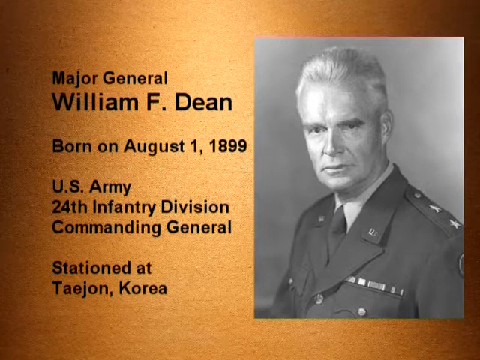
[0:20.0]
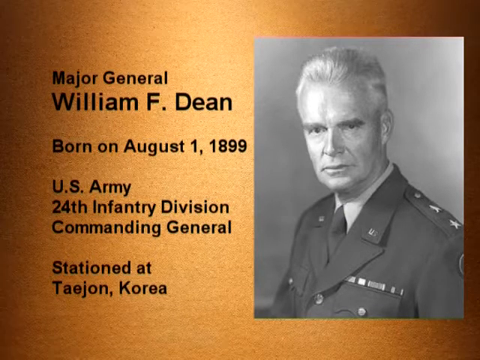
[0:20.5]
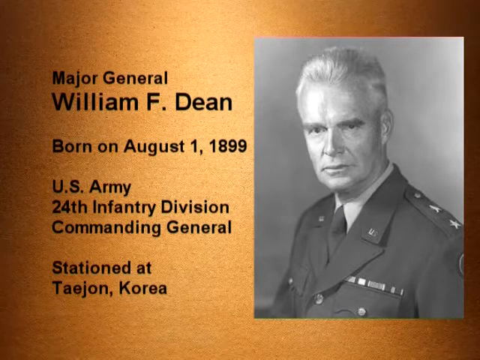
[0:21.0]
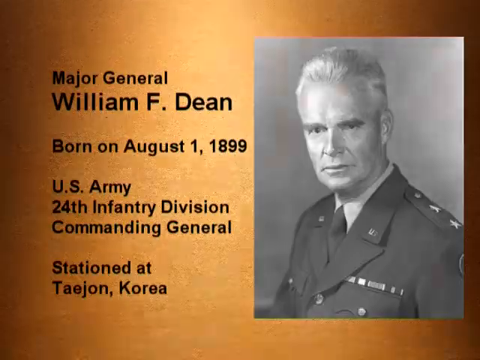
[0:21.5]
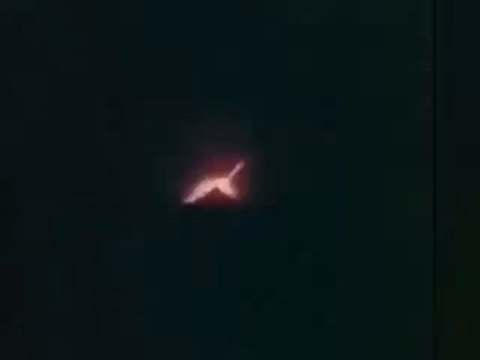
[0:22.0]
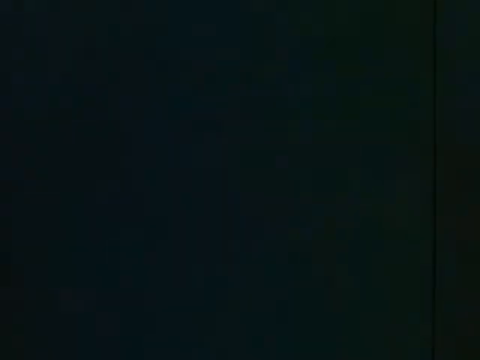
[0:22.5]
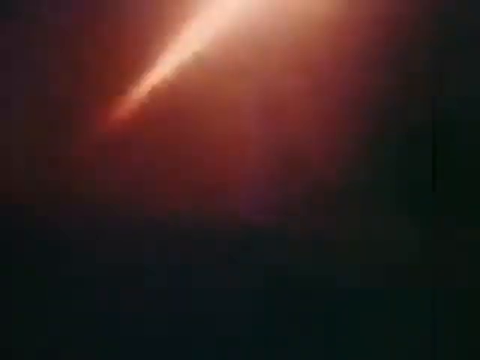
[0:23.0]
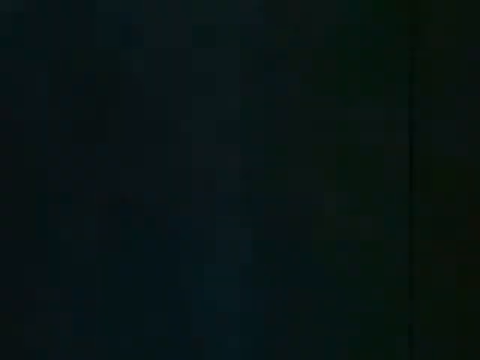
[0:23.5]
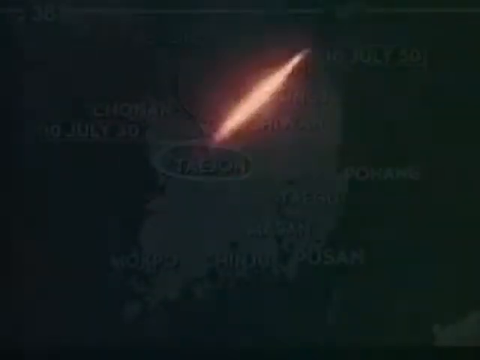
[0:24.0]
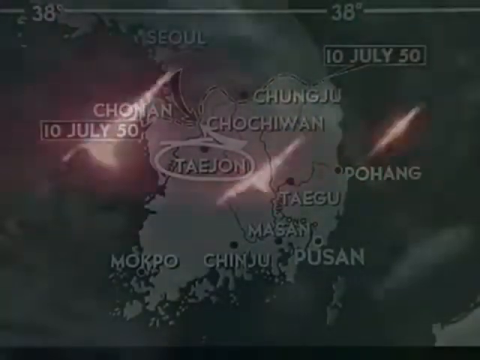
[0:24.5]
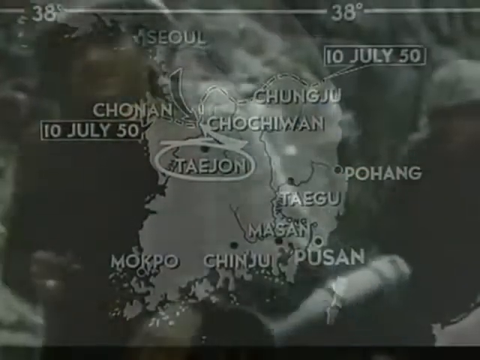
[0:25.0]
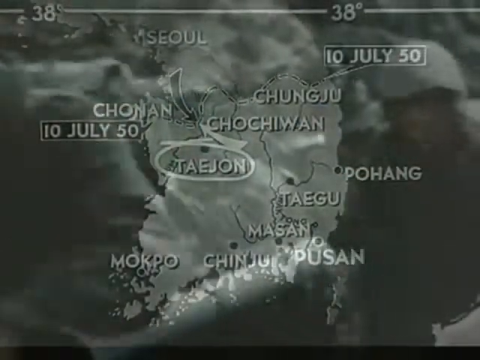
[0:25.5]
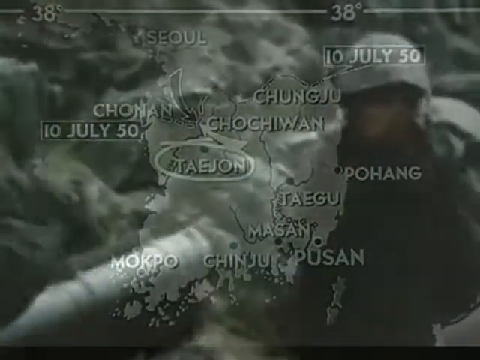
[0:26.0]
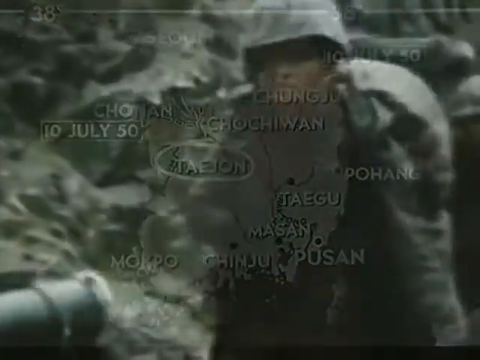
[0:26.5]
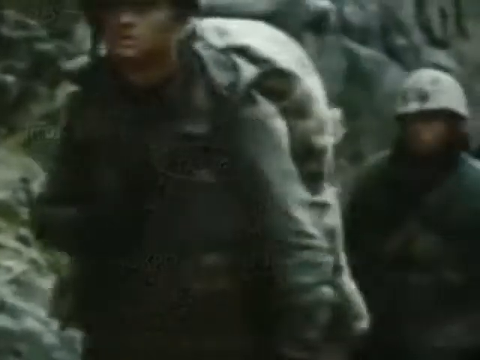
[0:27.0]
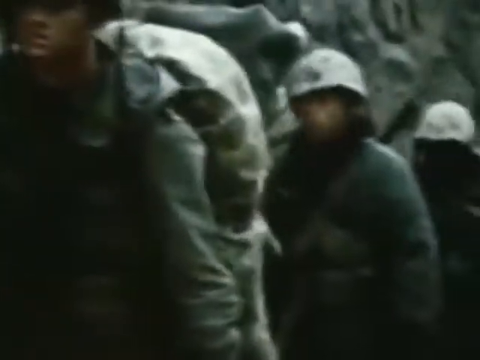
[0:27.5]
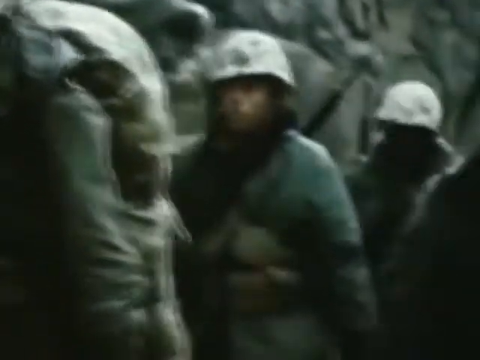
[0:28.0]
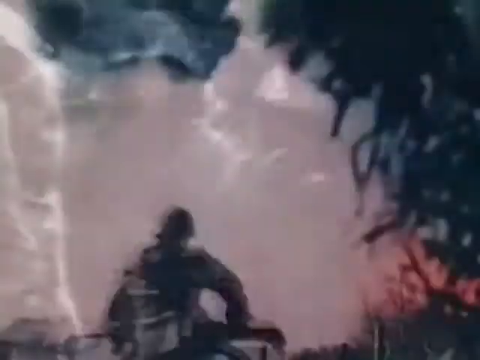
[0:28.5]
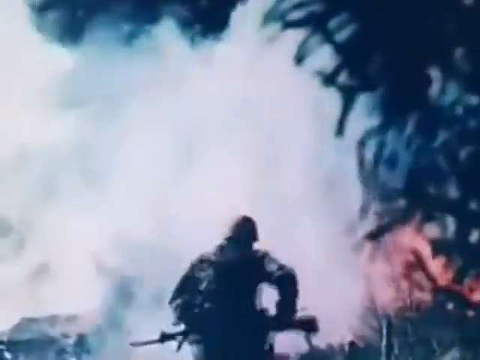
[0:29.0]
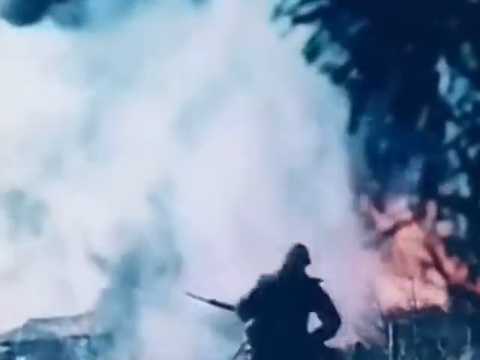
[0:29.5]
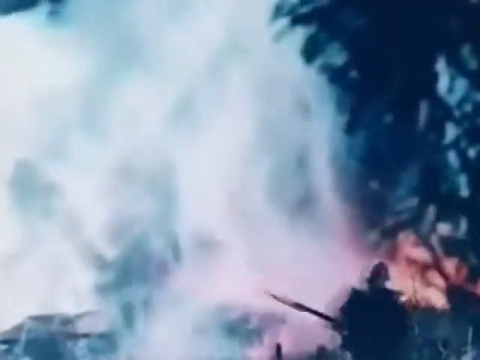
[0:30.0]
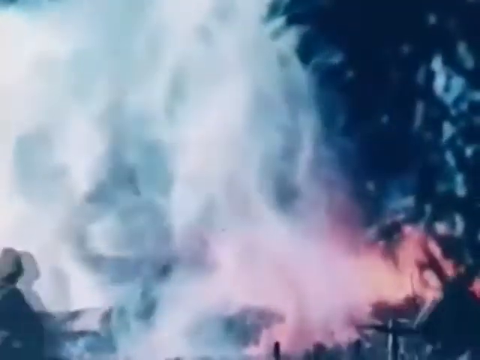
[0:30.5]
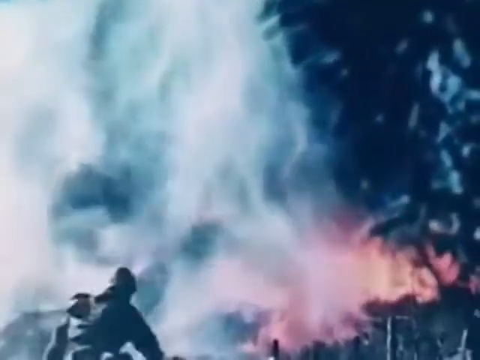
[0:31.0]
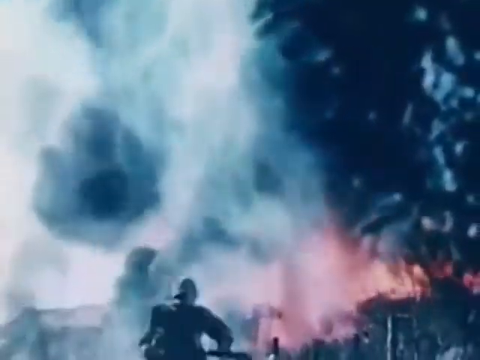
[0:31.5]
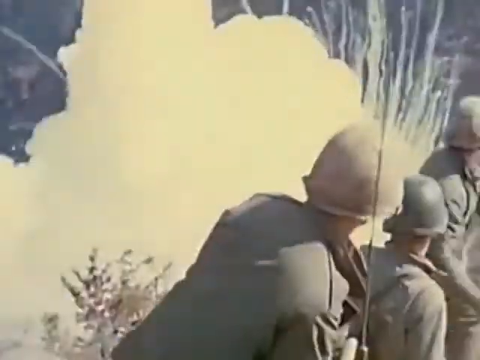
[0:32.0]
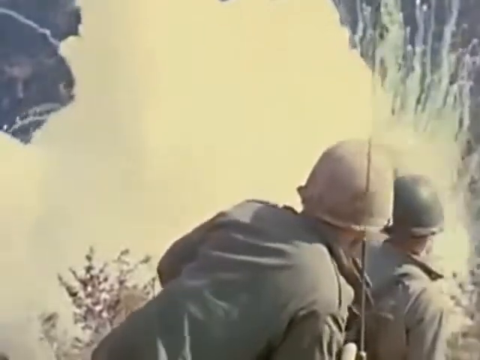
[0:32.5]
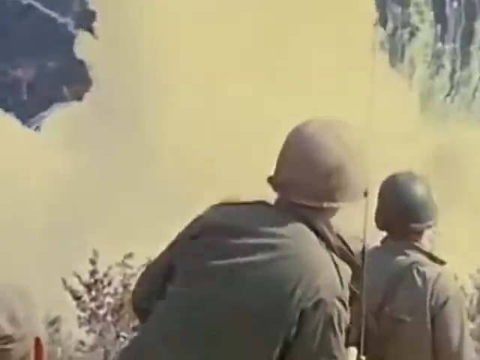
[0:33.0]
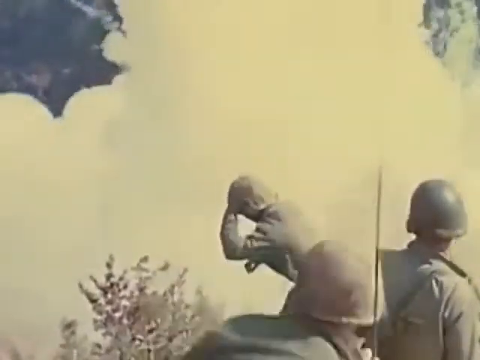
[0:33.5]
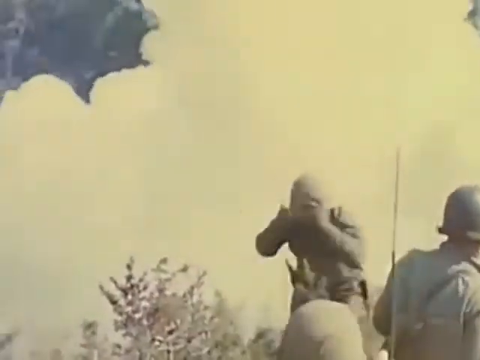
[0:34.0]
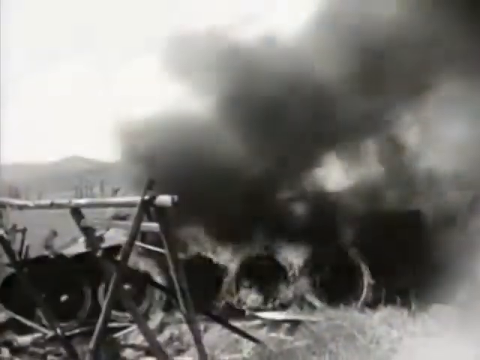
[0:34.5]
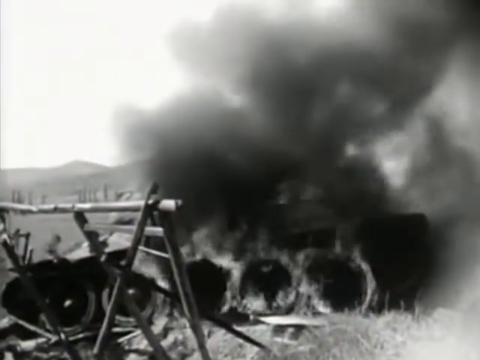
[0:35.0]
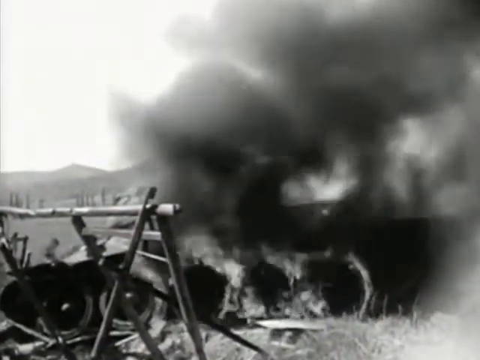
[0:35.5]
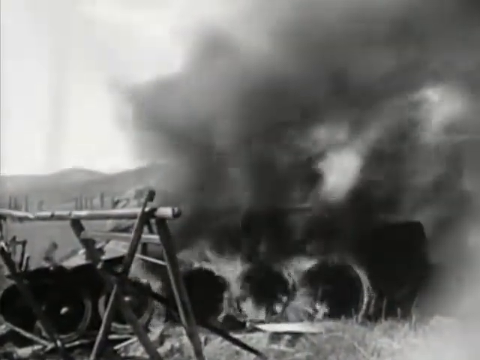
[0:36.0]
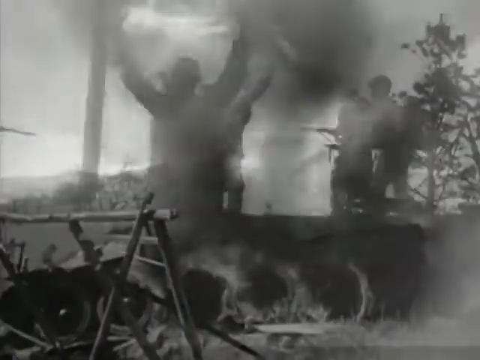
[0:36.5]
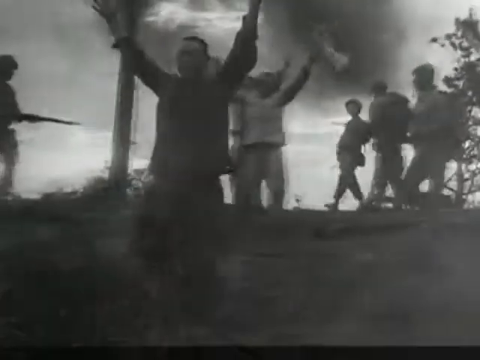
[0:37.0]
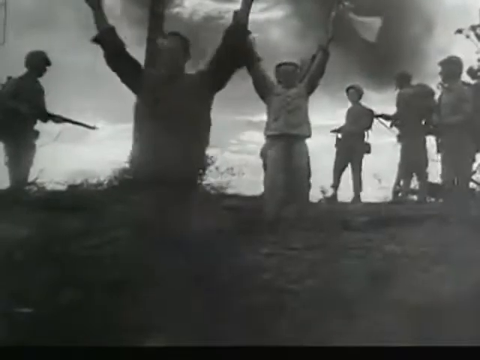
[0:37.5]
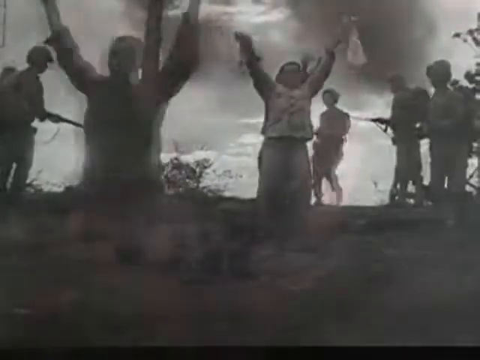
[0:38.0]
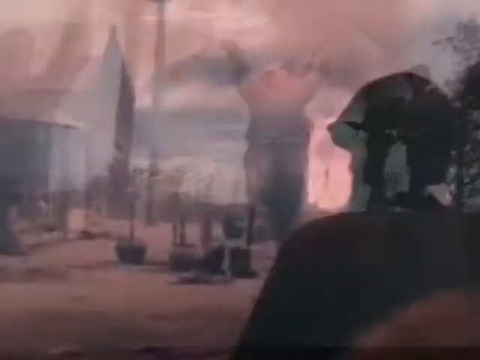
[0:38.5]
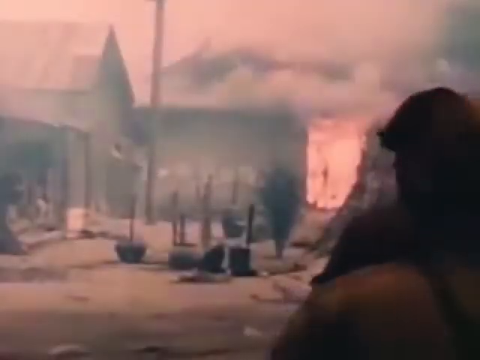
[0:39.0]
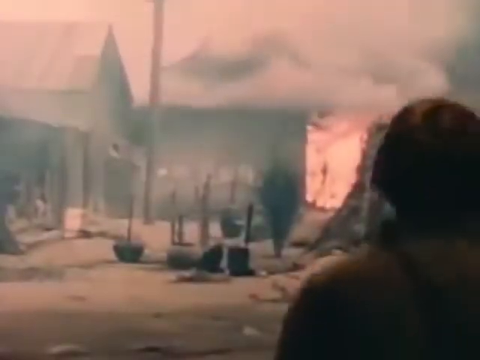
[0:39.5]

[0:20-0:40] A background shows black text reading "Major General William F. Dean, born on August 1, 1899, U.S. Army, 24th Infantry Division, Commanding General, stationed at Daejeon, Korea." A black and white picture shows a man with short, somewhat white hair, possibly blonde, wearing a military uniform and looking somewhat stern. The scene then shifts to a black background with a bright red light flashing repeatedly, which looks somewhat like missiles or something similar. A map overlaps this, showing locations including Seoul, Chonan, Chosikwon, Chungju, Daejeon (circled in white), Pohang, Taegu, Masan, Mokpo, Jinju and Pusan, along with dates reading "July 10, 50" and "July 10, 50". A very old clip follows of military men walking. Another man runs roughly toward a very large white mist or smoke, with some fire in the background. More army men appear, along with some very yellow smoke. Clips show things burning with smoke rising from them. Some men walk with their arms in the air alongside military men with guns, and another clip shows men walking in a straight line with fire in the distance.